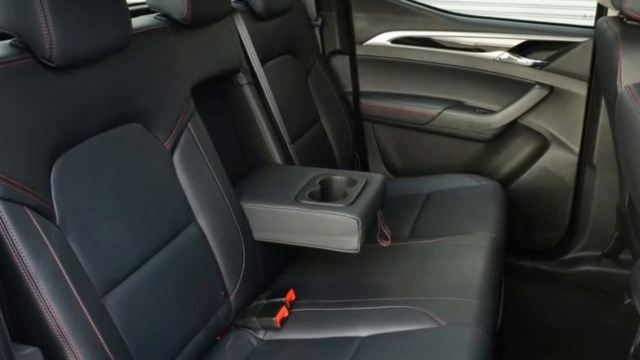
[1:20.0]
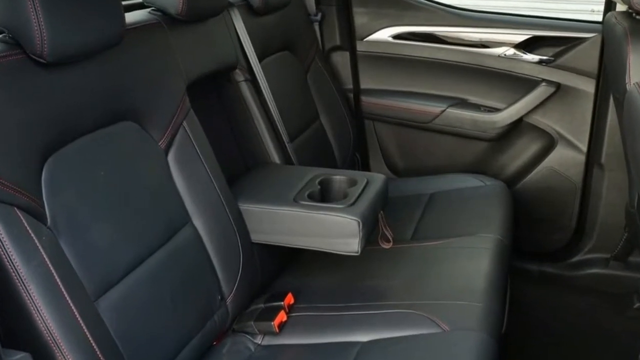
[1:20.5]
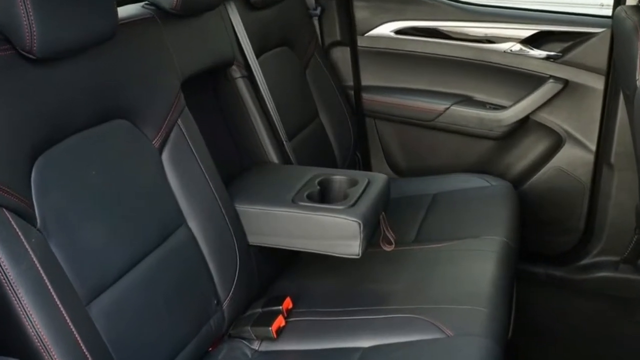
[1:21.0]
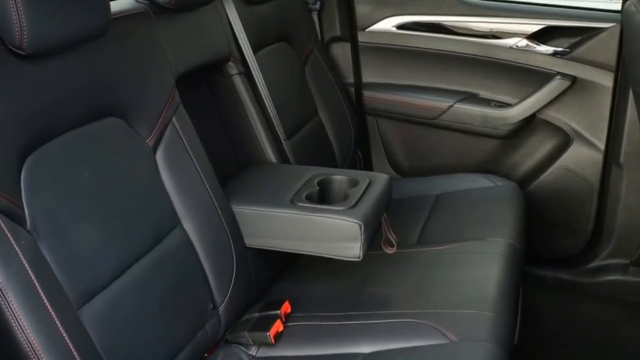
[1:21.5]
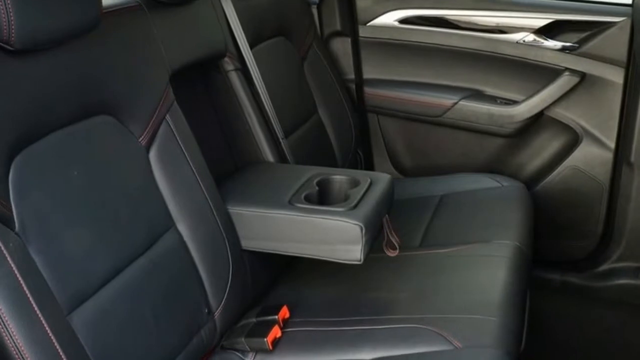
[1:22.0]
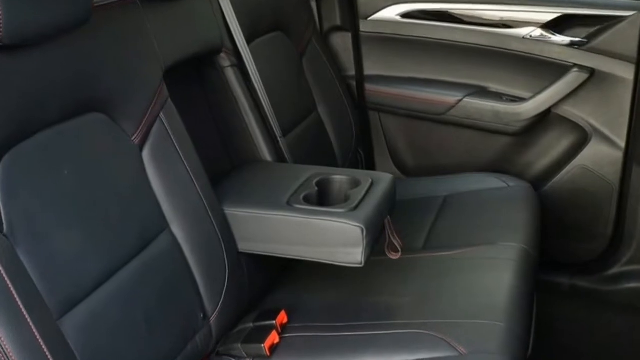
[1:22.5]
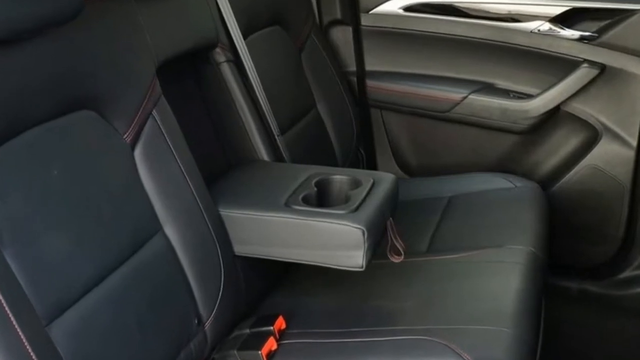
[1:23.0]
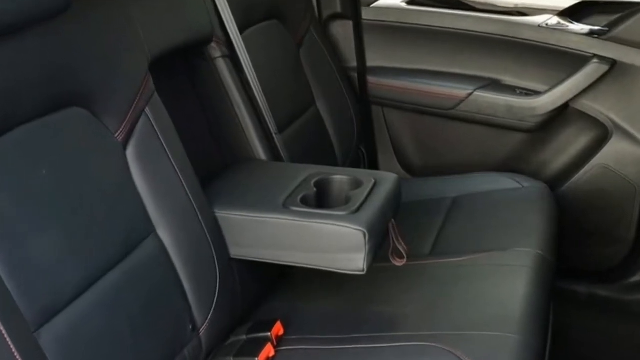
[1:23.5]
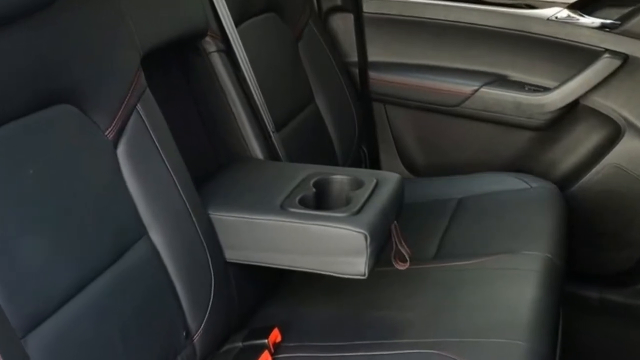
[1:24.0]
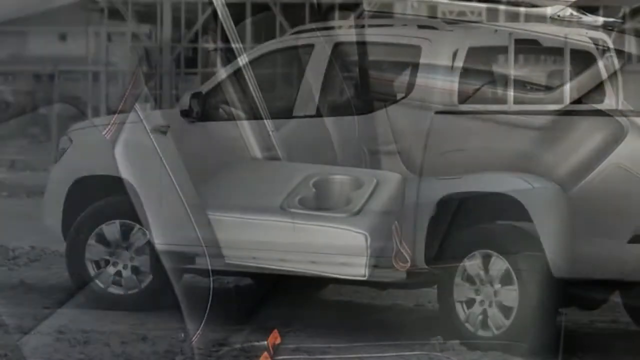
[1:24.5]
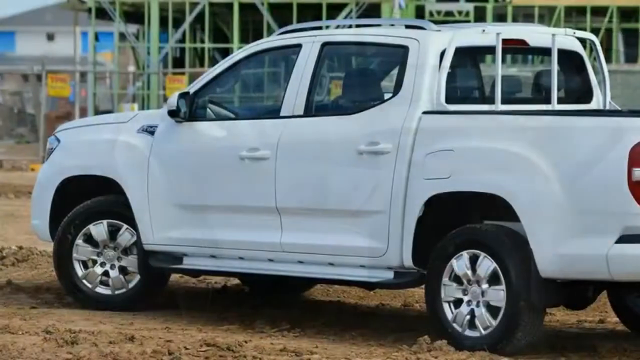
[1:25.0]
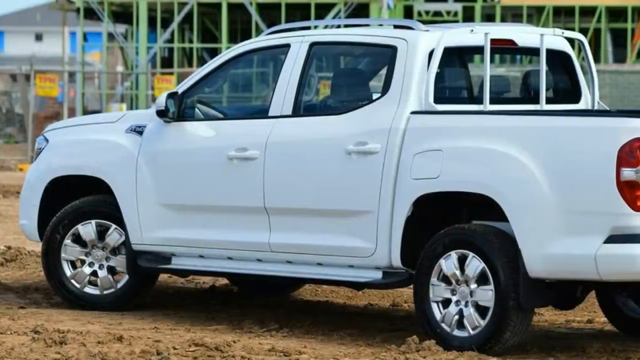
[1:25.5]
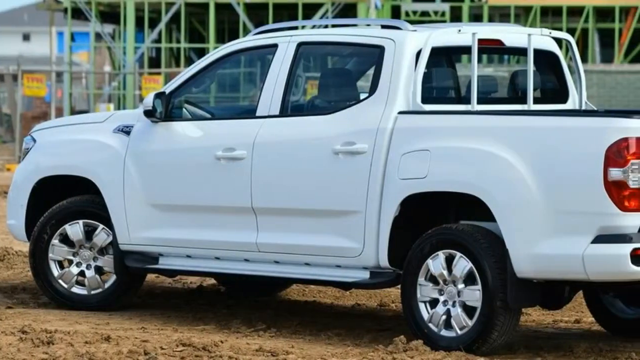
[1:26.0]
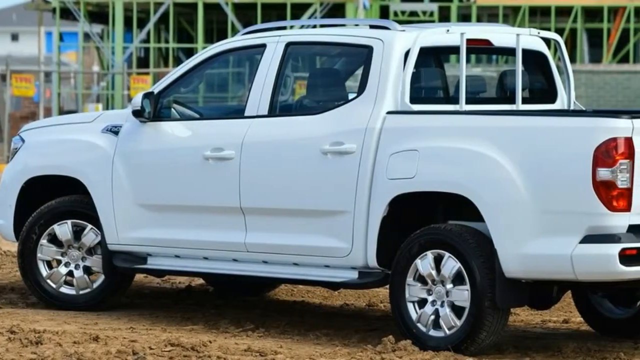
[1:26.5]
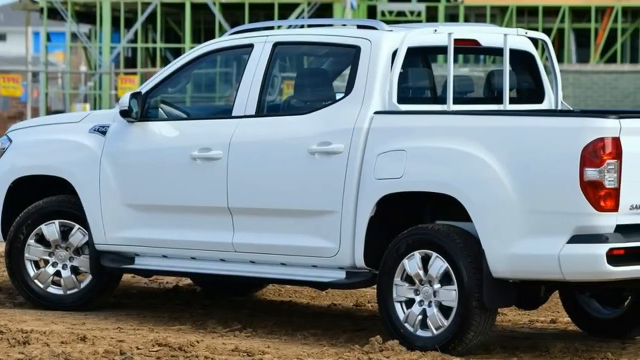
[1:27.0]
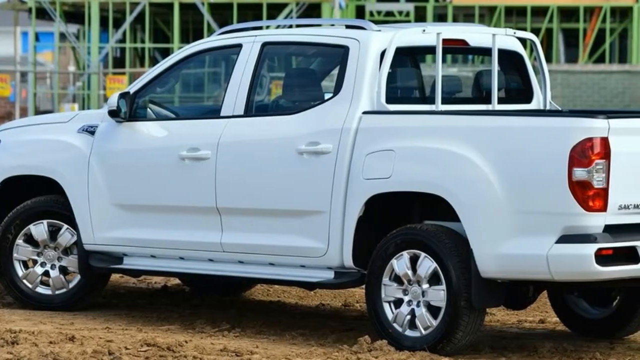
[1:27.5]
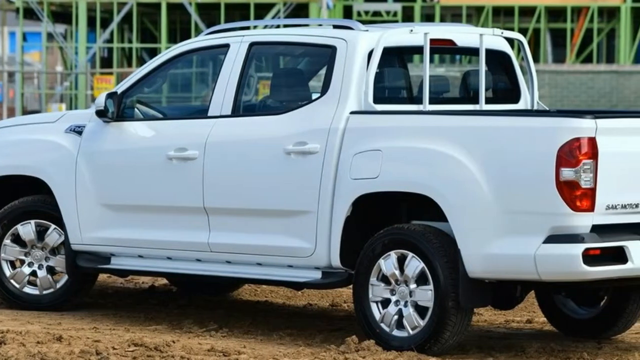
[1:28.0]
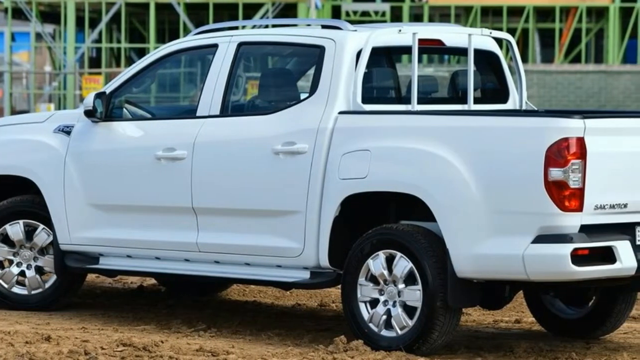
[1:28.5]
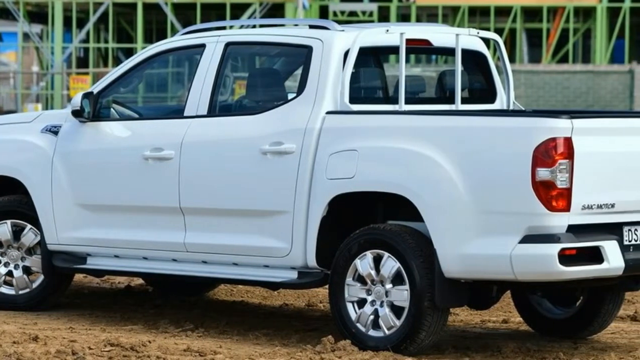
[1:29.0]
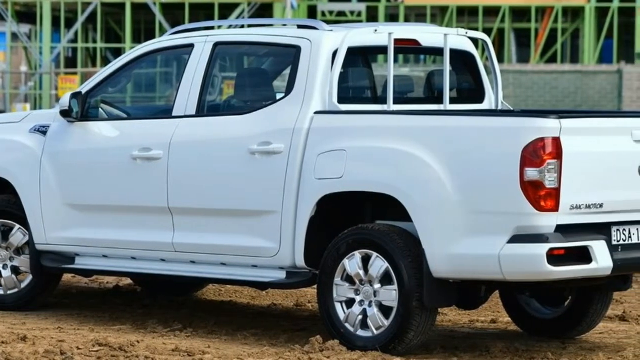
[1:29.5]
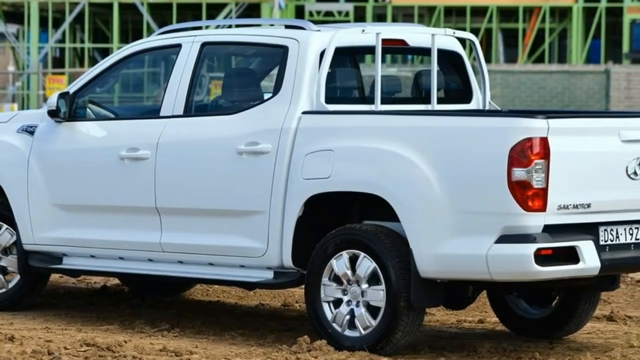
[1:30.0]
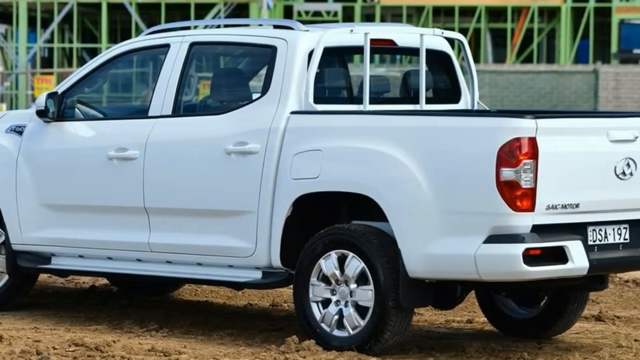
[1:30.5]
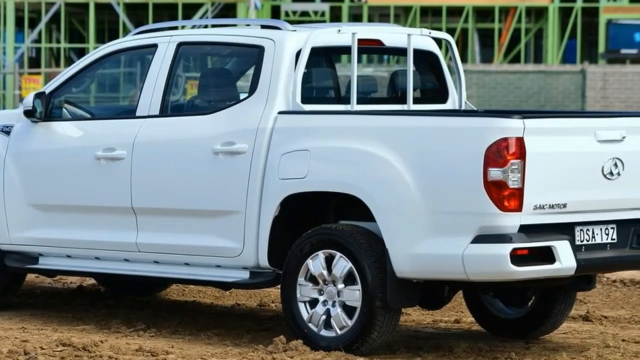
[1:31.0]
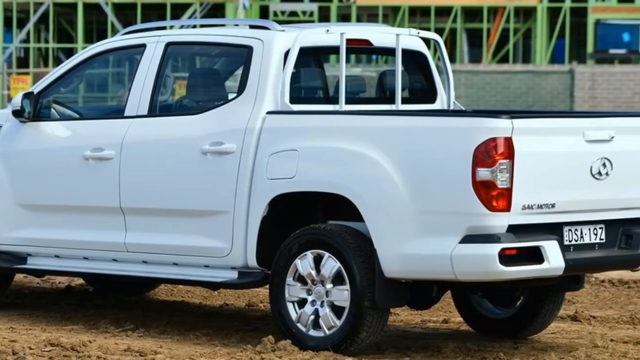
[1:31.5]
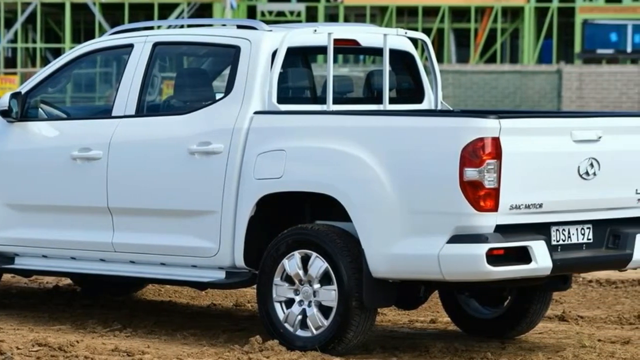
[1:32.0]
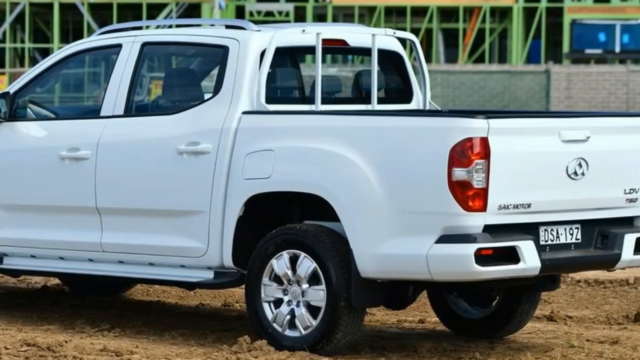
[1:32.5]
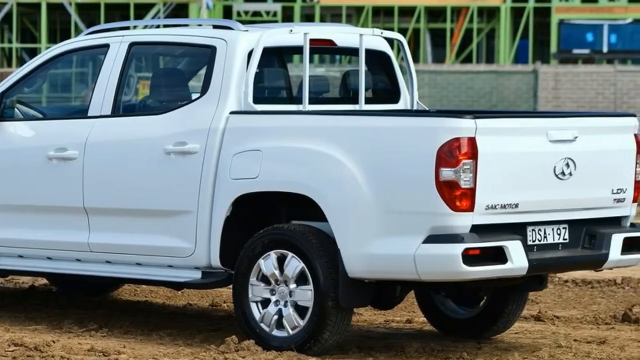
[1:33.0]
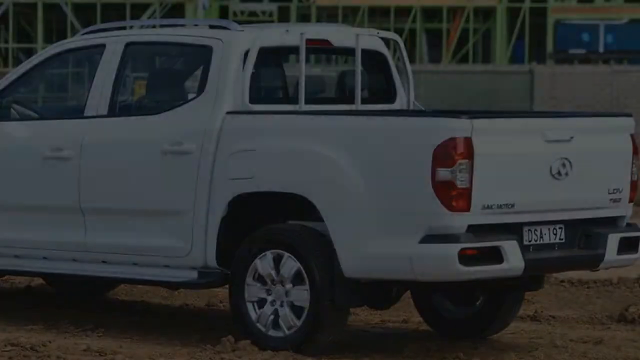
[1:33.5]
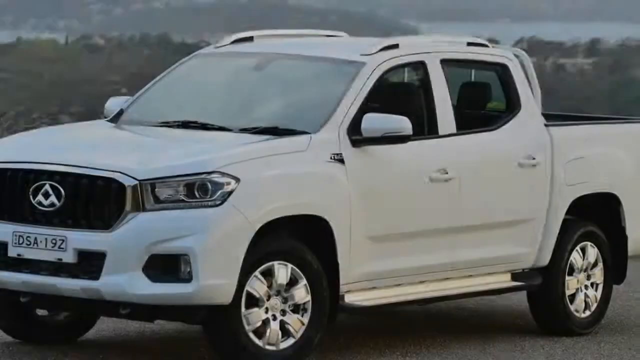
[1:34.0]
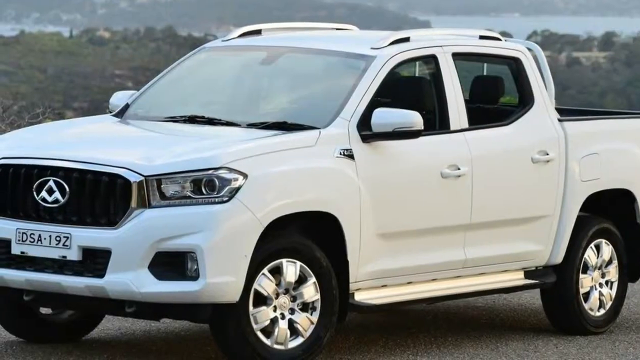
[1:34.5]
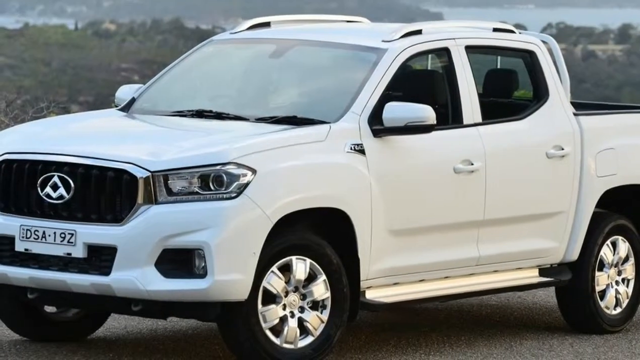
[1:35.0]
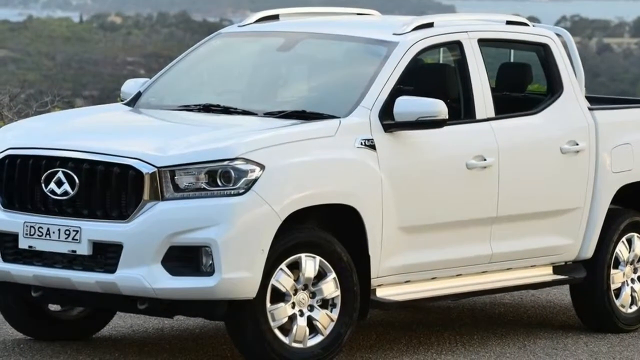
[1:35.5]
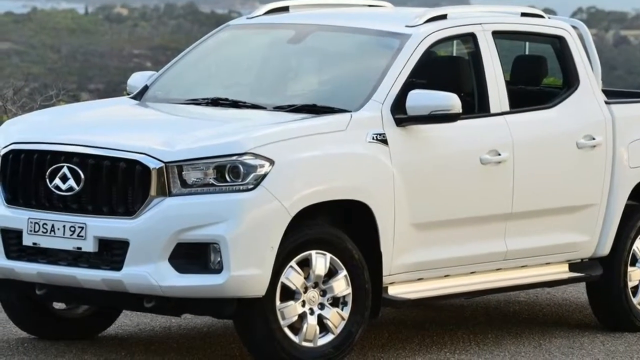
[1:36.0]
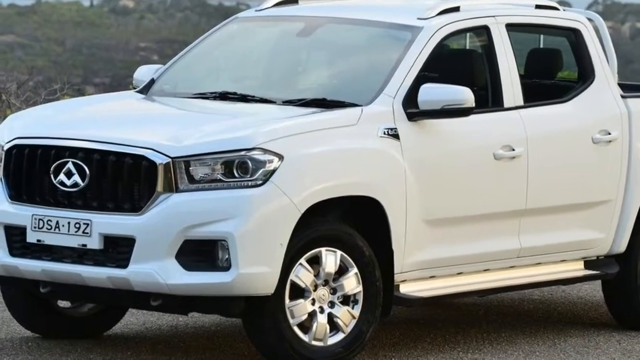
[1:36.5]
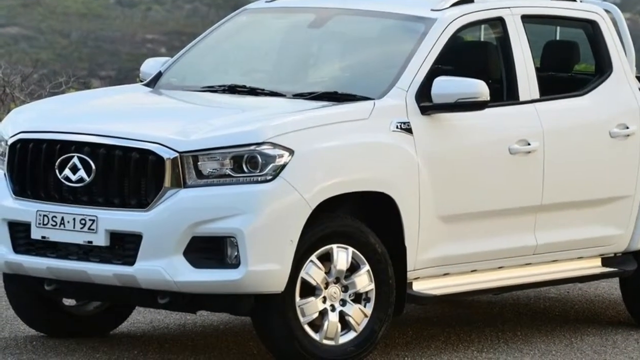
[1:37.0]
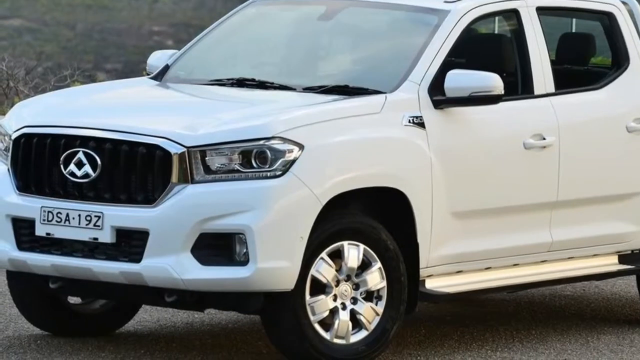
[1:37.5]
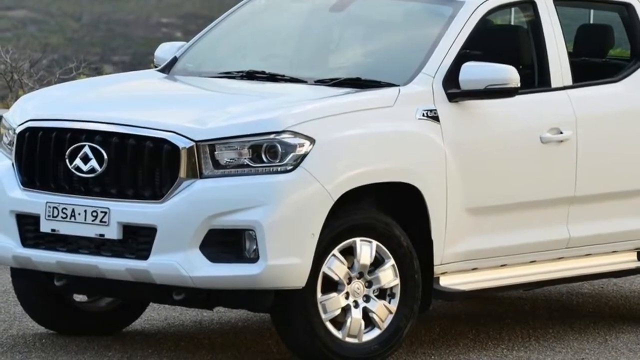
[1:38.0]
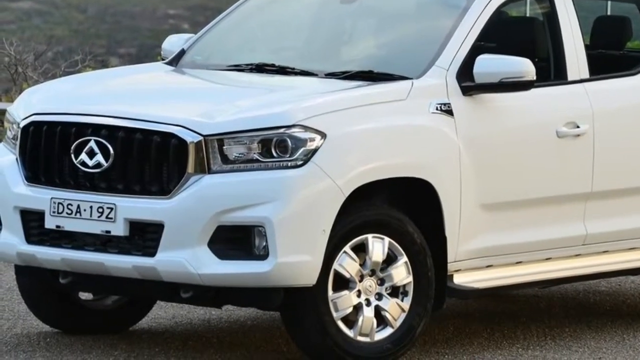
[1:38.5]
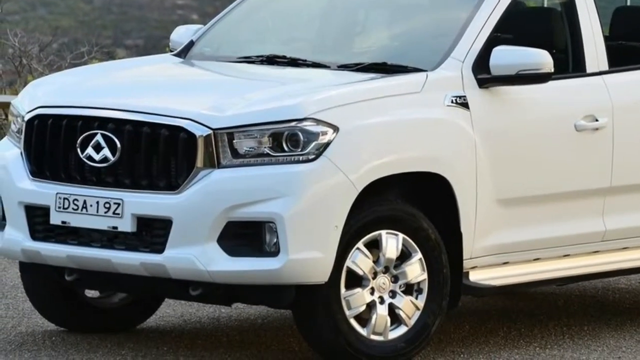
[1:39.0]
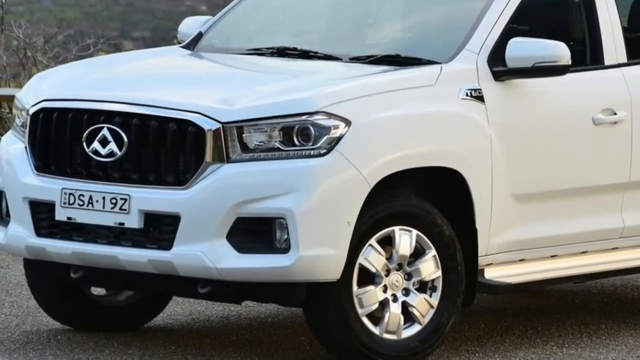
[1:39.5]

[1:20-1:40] The back seat of a car is filmed, showing a folded-down cup holder in the back and a dark headrest at the top, with light shining in at the upper right-hand corner. The camera zooms in on the cup holder, then cuts to the outside of the vehicle, a white four-door truck with red taillights at the back. At the front, the license plate reads "DSA-19Z." The camera then zooms in somewhat on the front grill.